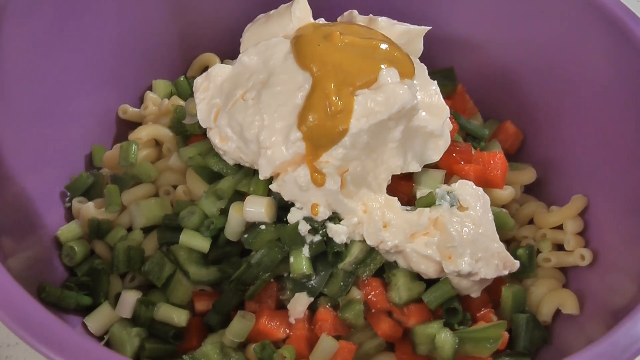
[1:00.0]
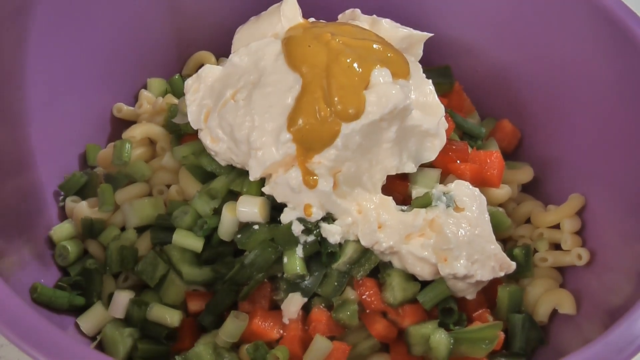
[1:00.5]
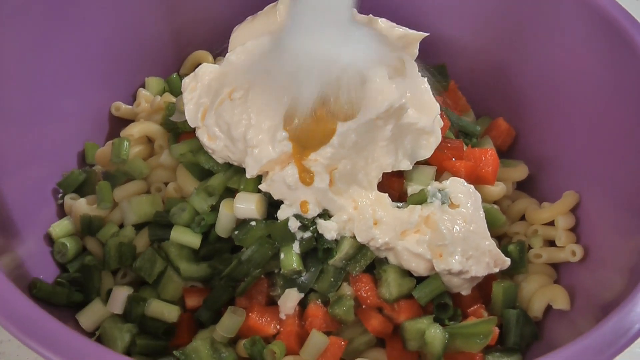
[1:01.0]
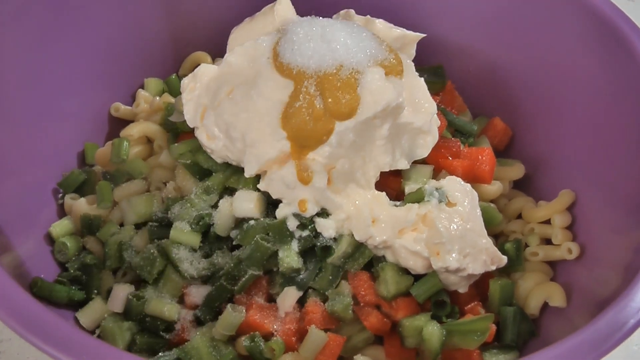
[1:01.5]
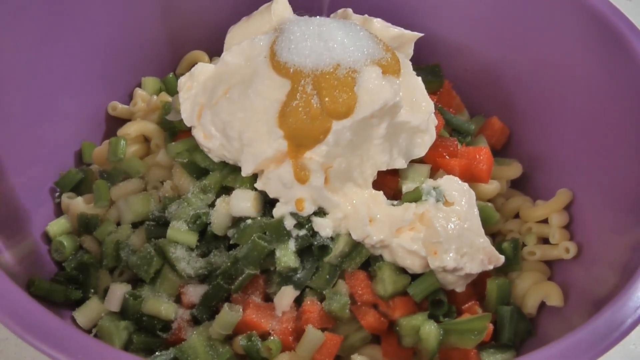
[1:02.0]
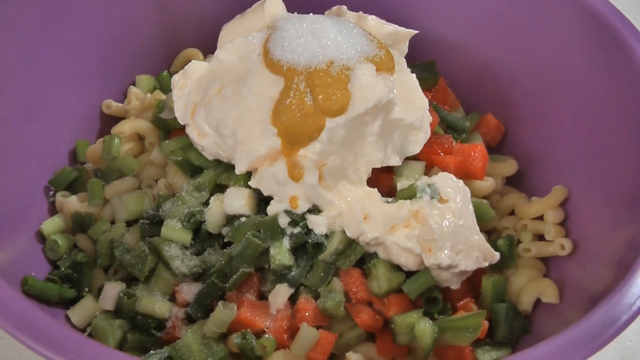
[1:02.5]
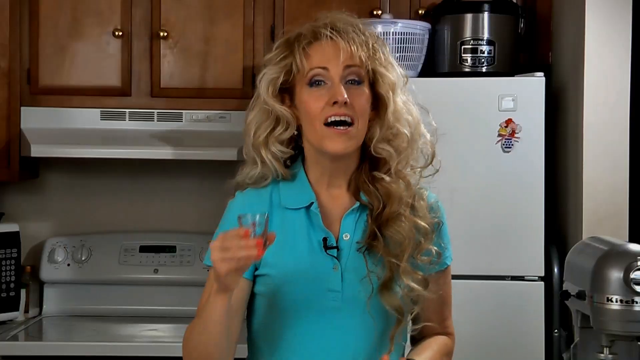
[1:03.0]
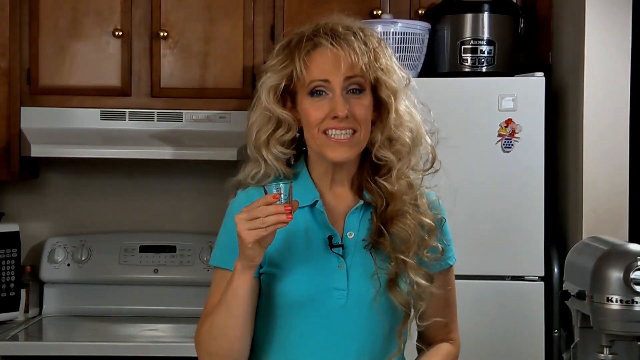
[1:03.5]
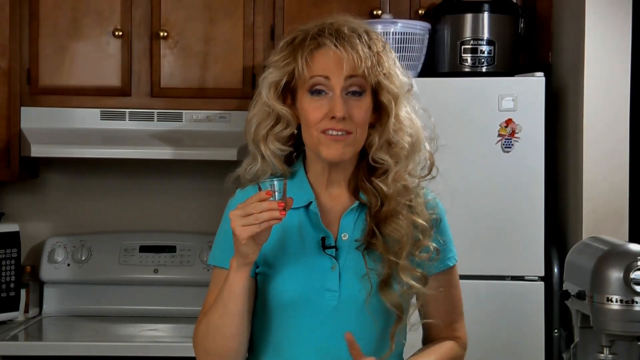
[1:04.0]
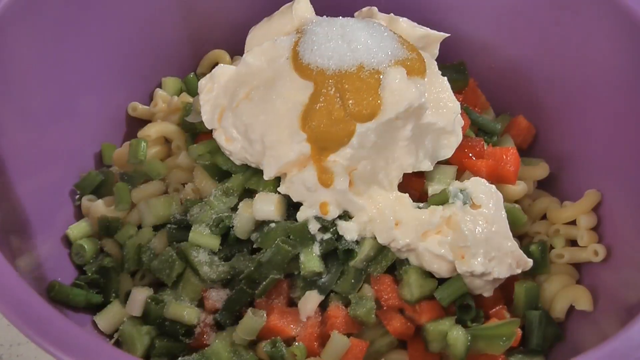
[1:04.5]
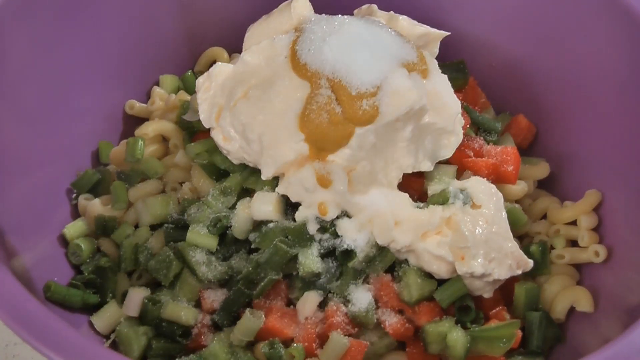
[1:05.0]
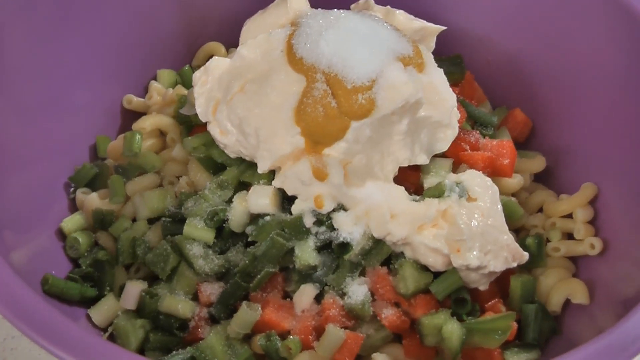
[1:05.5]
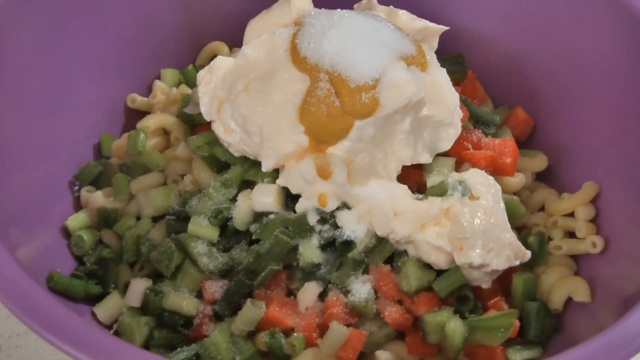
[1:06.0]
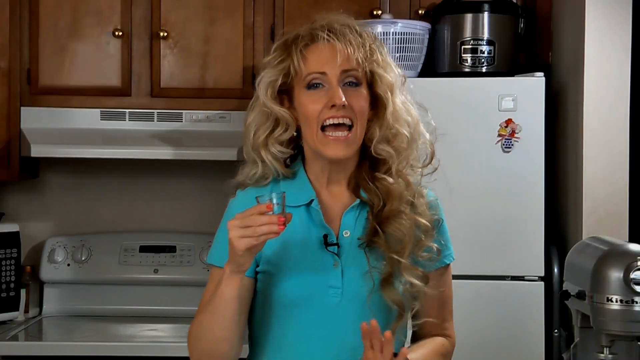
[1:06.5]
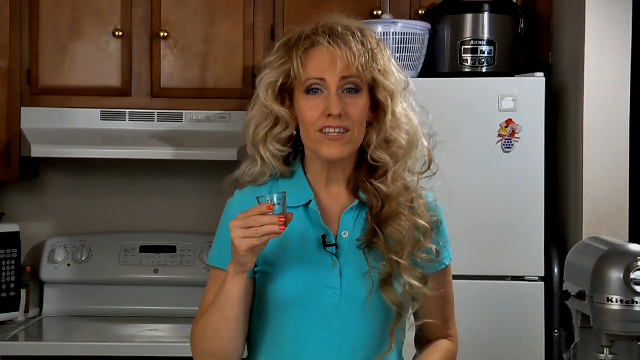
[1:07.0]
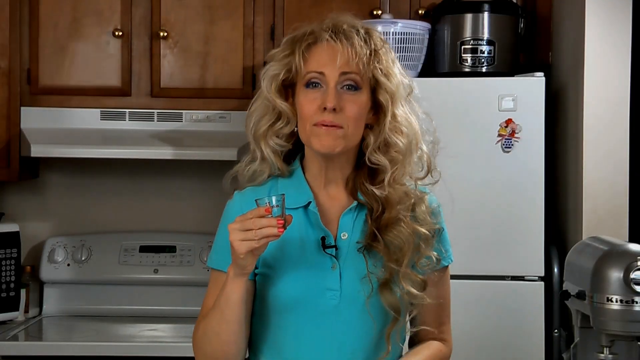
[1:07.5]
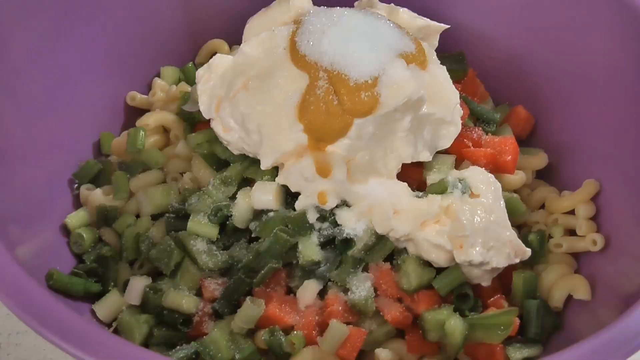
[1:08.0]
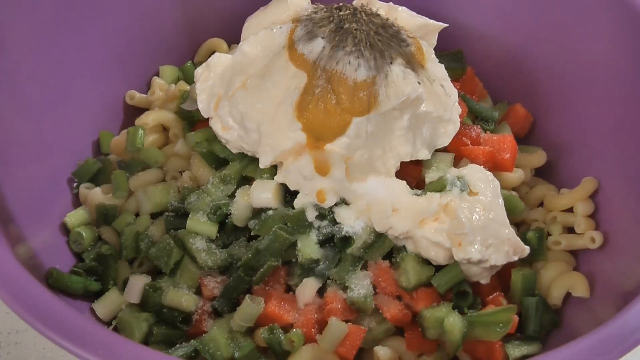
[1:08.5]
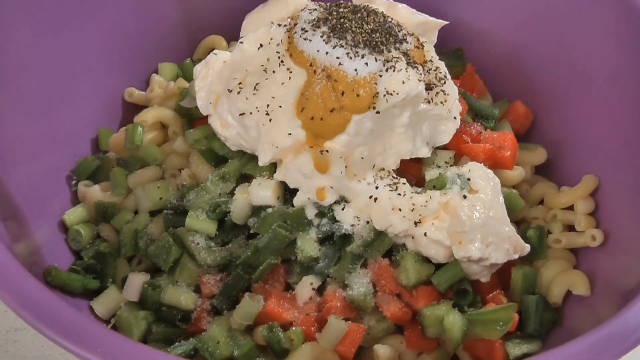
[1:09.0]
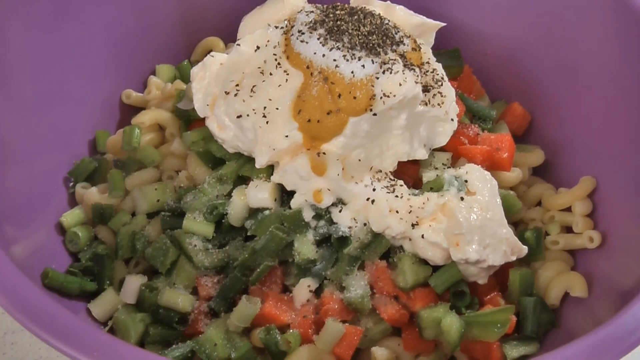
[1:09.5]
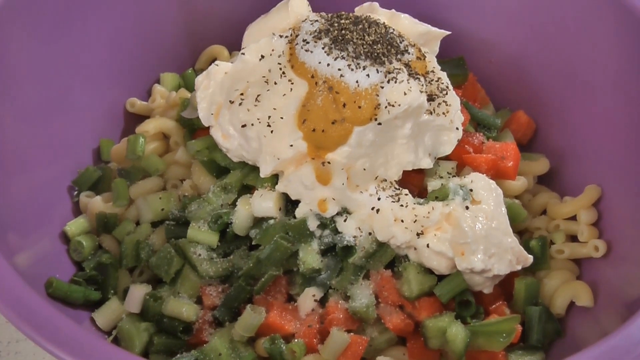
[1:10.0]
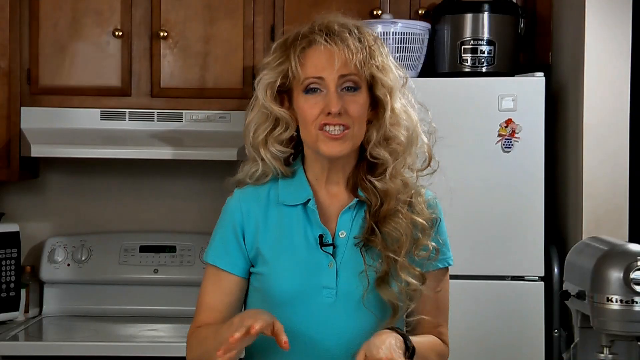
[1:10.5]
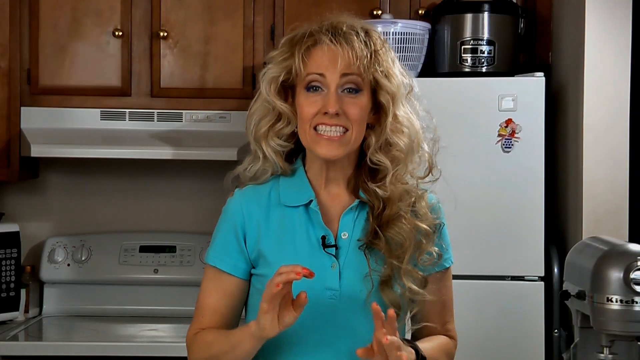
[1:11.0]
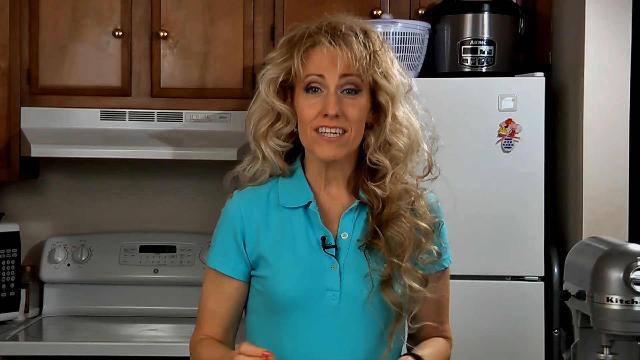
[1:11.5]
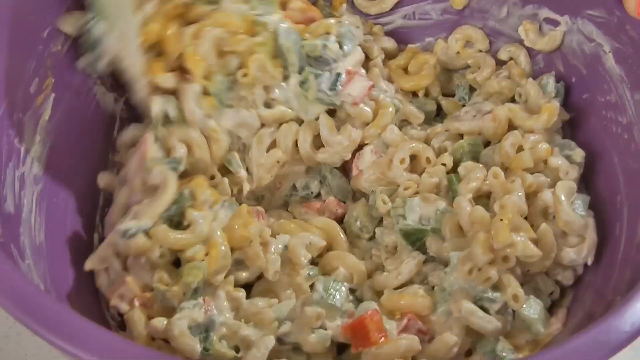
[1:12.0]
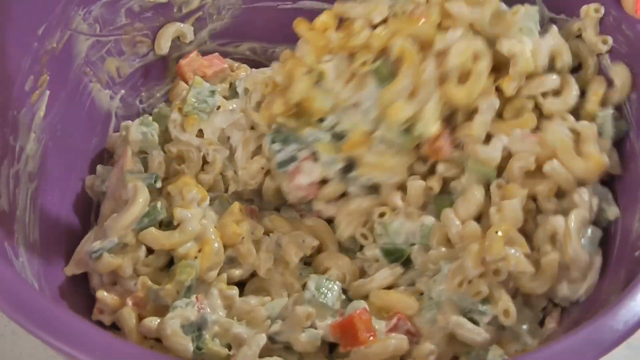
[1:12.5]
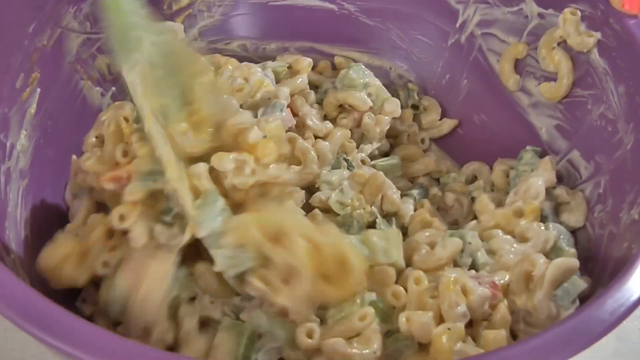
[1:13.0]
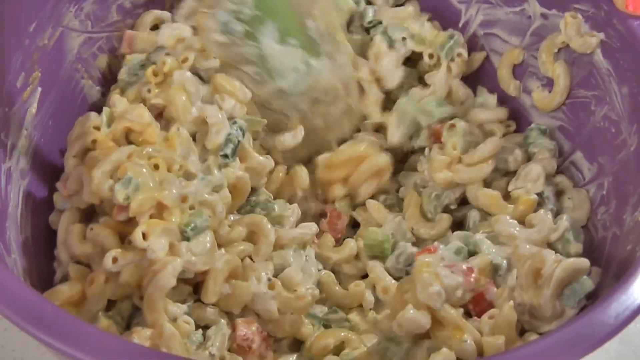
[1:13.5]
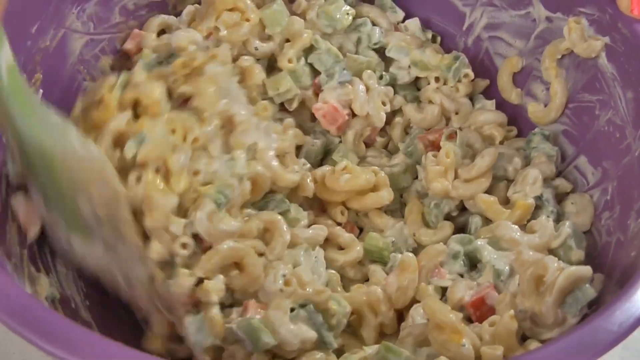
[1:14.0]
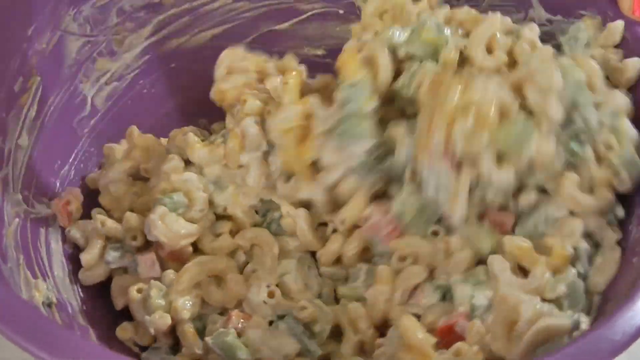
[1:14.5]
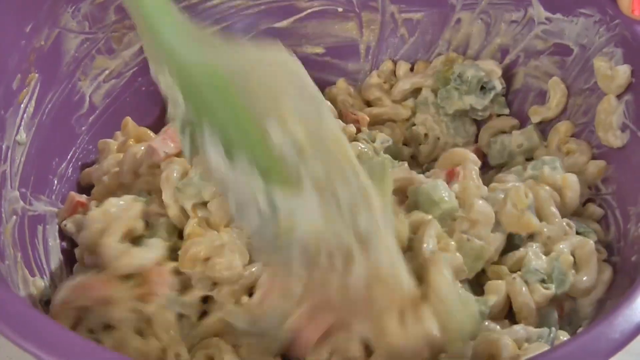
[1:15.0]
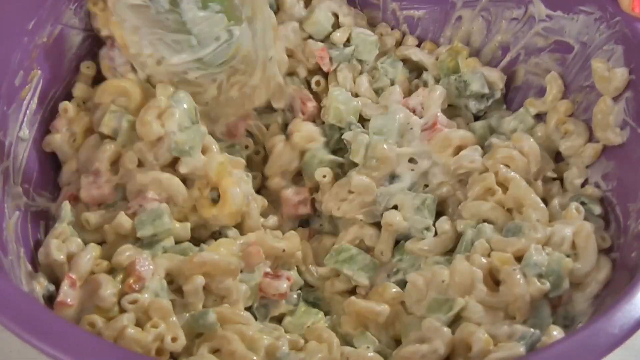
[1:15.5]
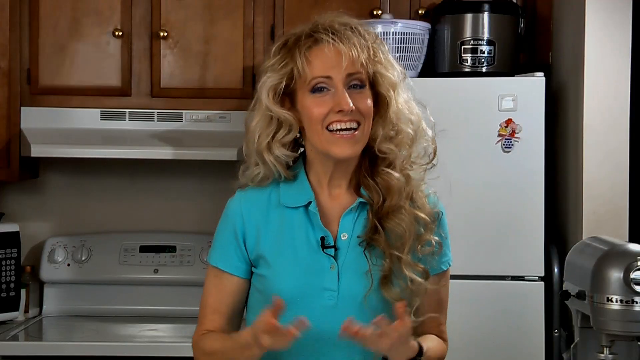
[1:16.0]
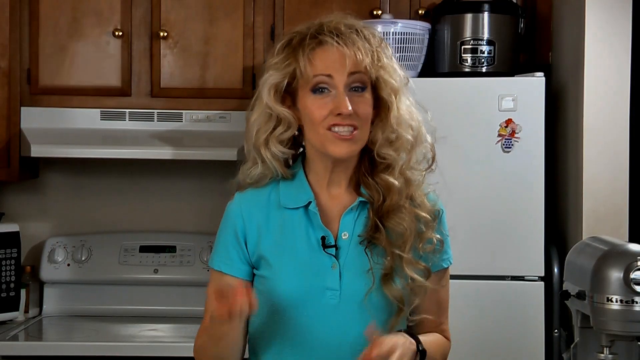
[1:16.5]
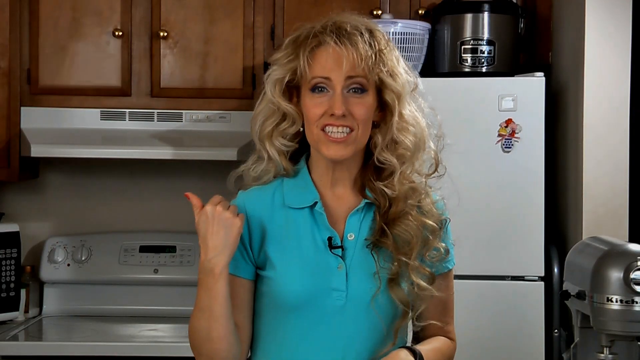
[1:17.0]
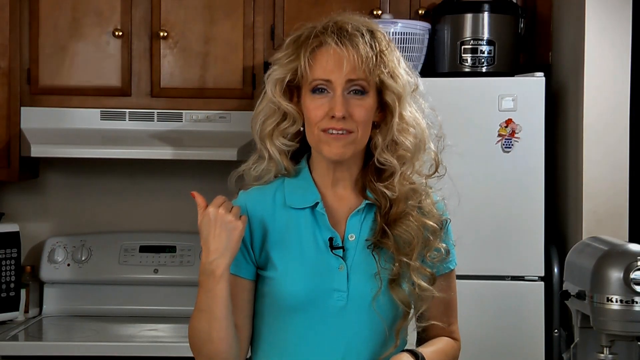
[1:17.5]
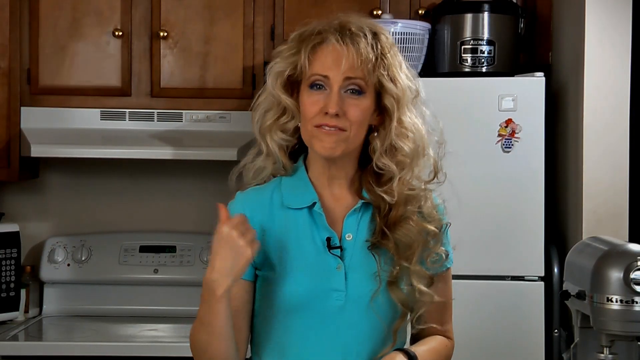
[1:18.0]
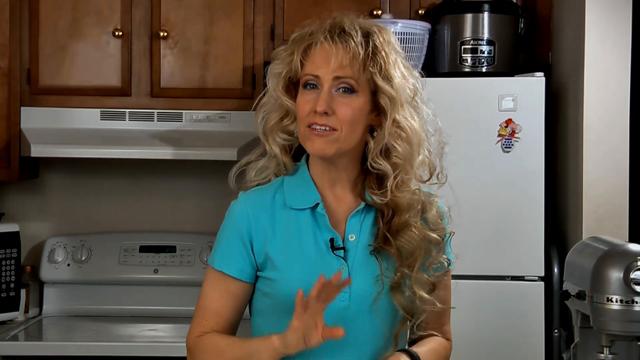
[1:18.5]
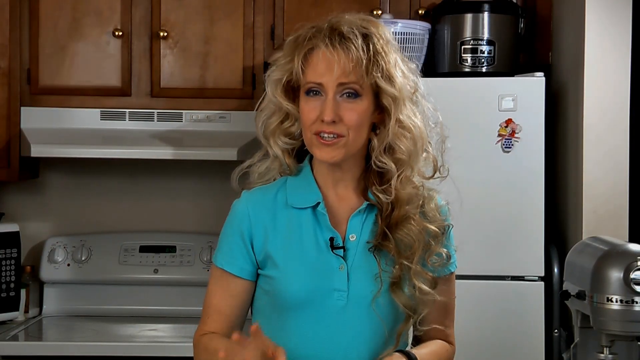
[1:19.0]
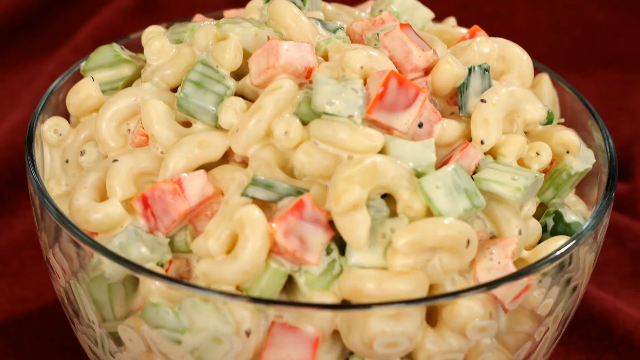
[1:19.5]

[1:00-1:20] The vegetables are mixed together with creamy mayonnaise. After pouring in peanut butter, the woman pours some salt on top of the salad. She then picks up a small colorless cup that appears to be used for measuring something to put into the bowl, and pours it in. She shows another measuring cup, apparently for pouring sugar or salt, but instead of salt she takes some herbs, measures them with the glass and pours them into the bowl. She then uses a green spoon to mix the food.